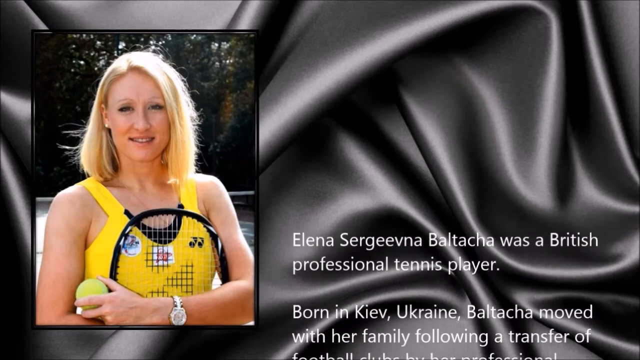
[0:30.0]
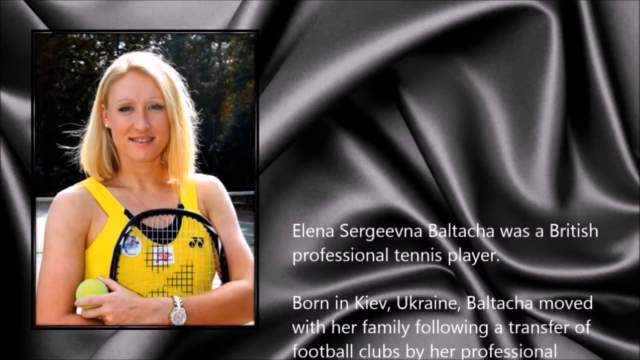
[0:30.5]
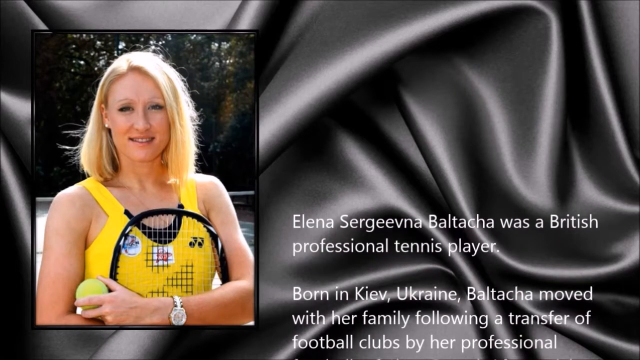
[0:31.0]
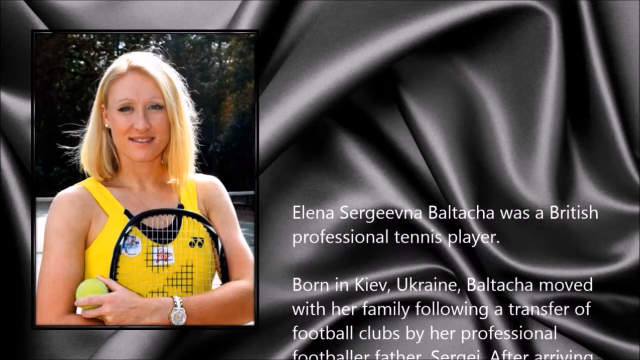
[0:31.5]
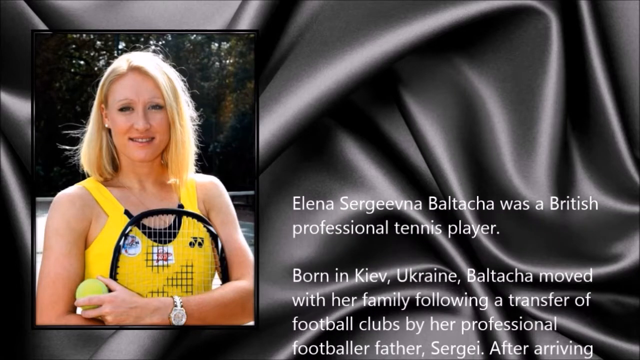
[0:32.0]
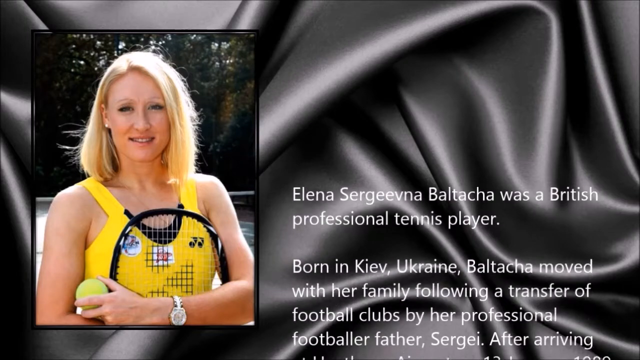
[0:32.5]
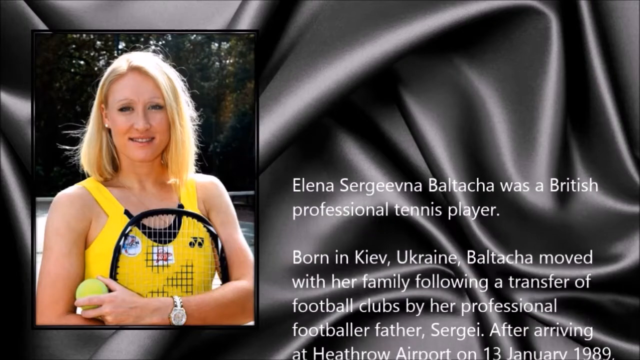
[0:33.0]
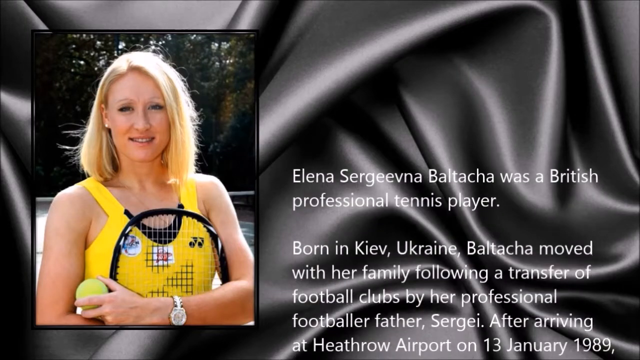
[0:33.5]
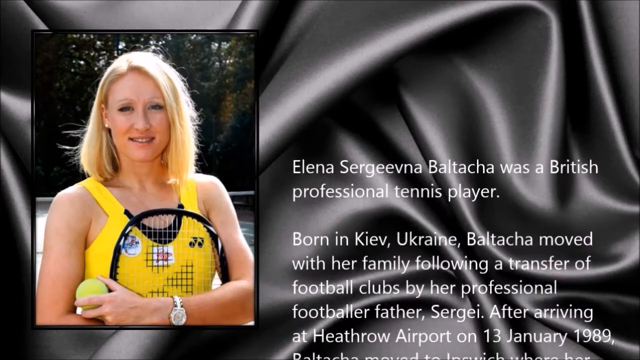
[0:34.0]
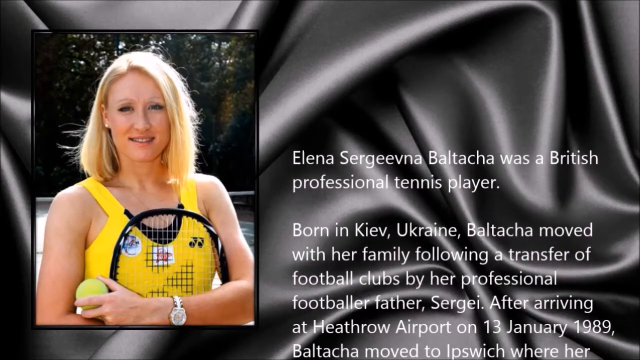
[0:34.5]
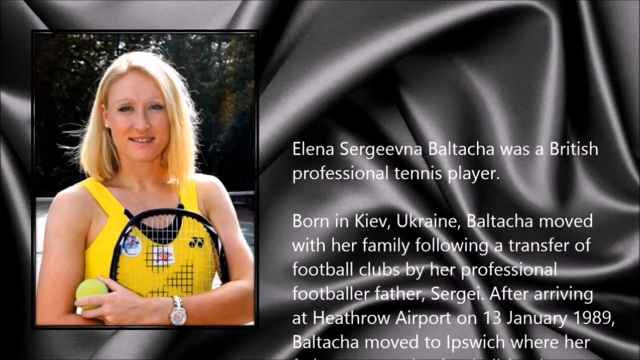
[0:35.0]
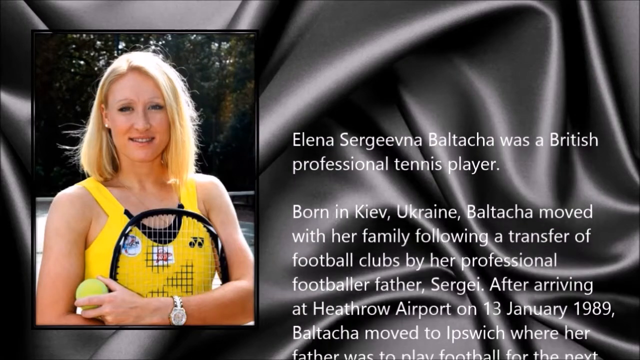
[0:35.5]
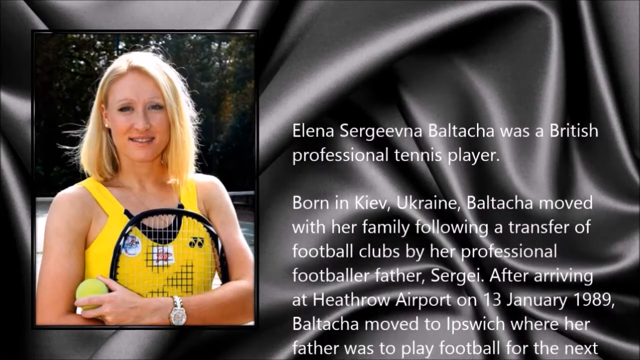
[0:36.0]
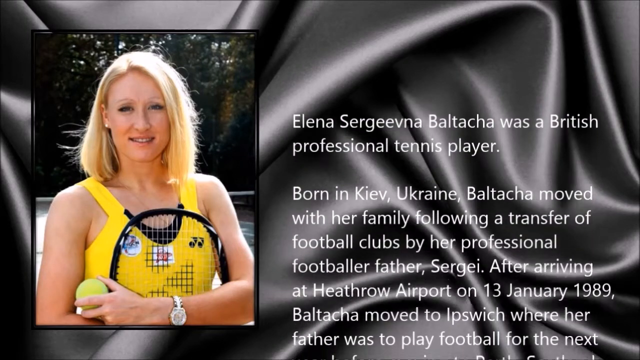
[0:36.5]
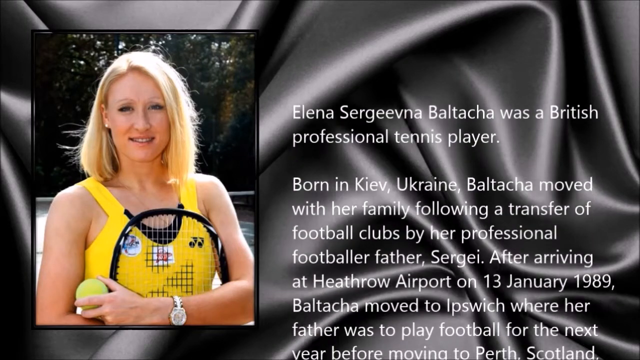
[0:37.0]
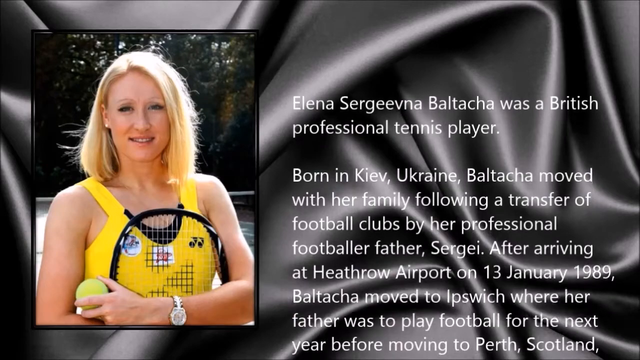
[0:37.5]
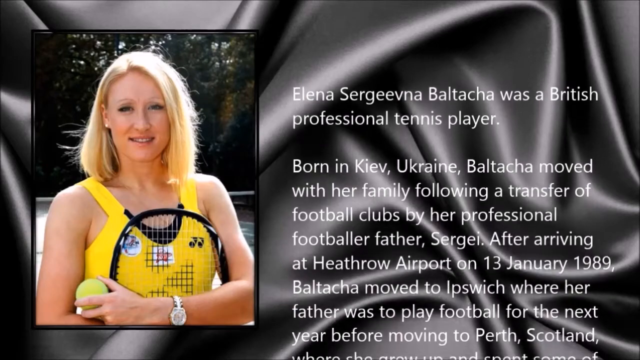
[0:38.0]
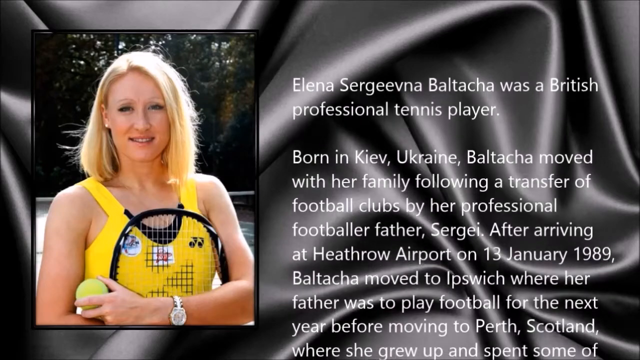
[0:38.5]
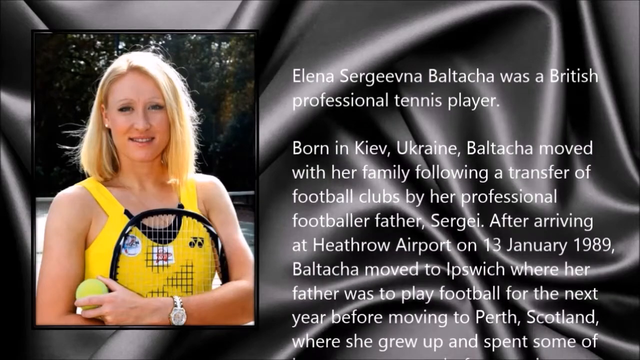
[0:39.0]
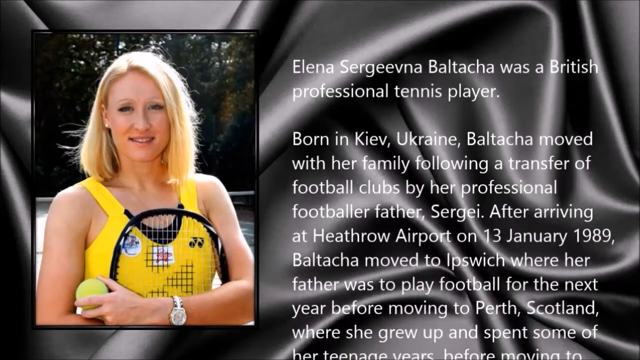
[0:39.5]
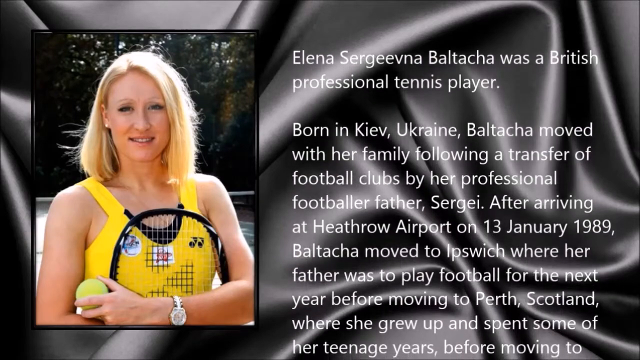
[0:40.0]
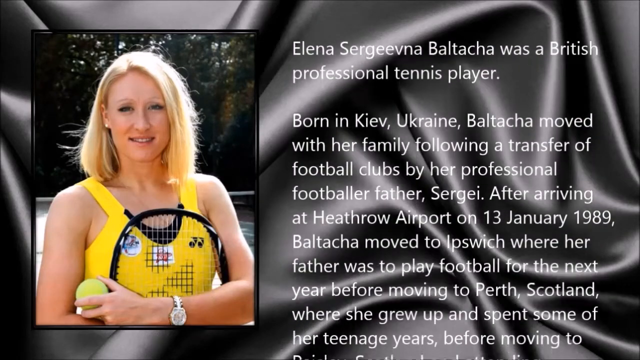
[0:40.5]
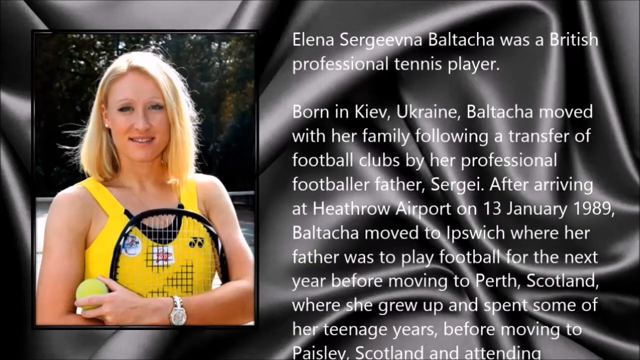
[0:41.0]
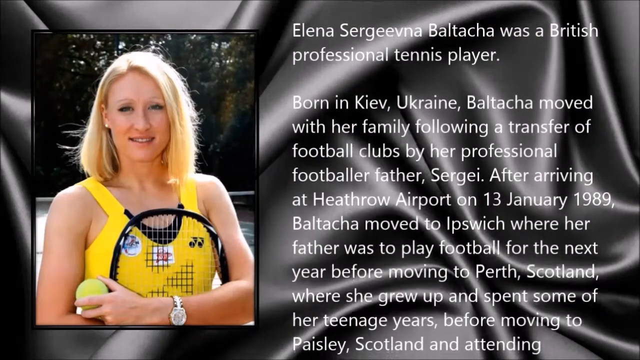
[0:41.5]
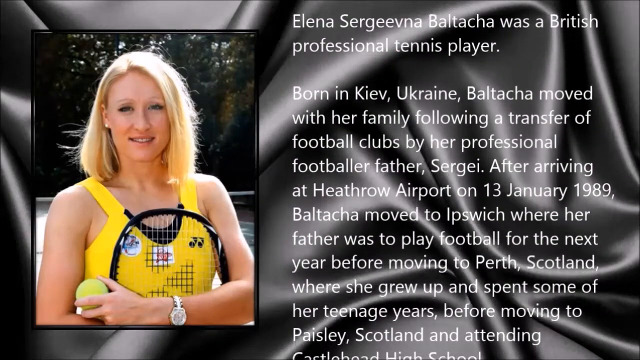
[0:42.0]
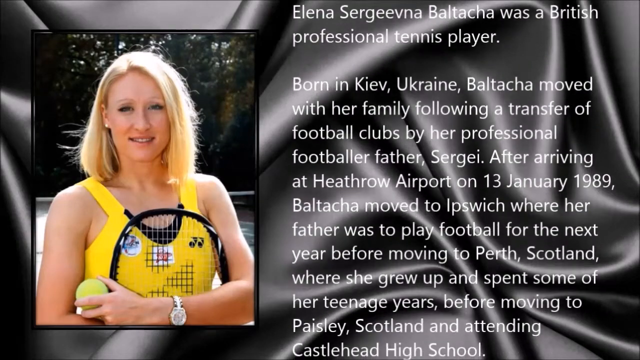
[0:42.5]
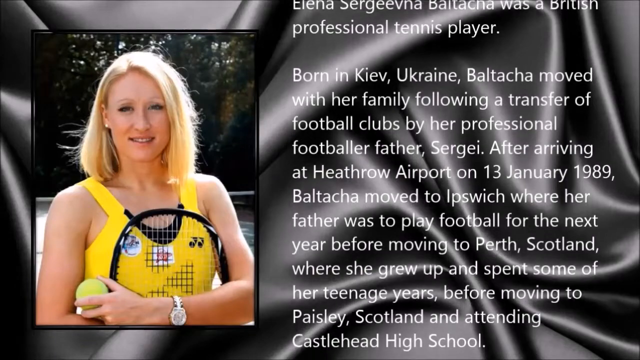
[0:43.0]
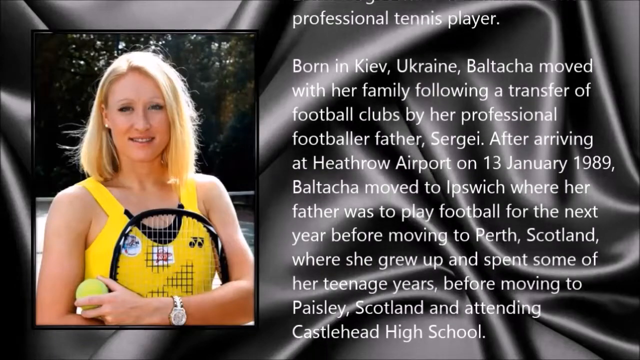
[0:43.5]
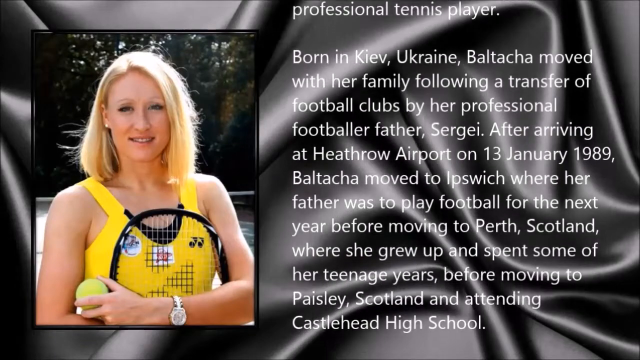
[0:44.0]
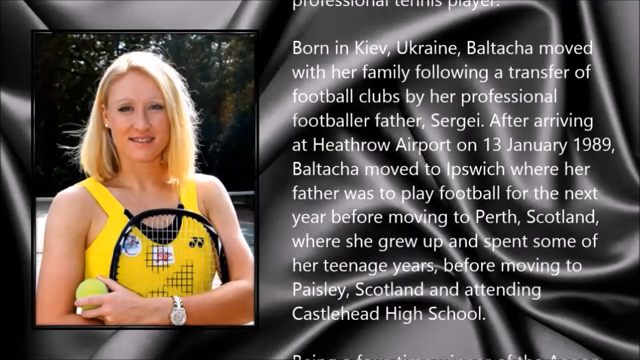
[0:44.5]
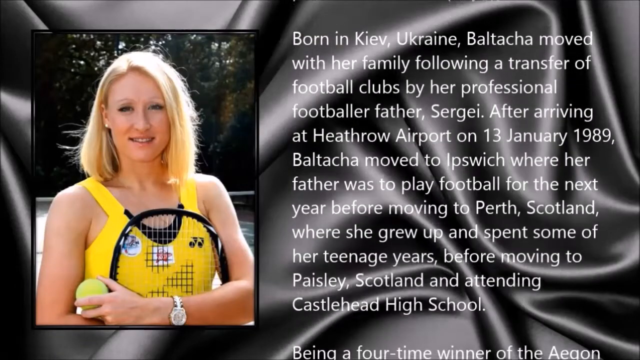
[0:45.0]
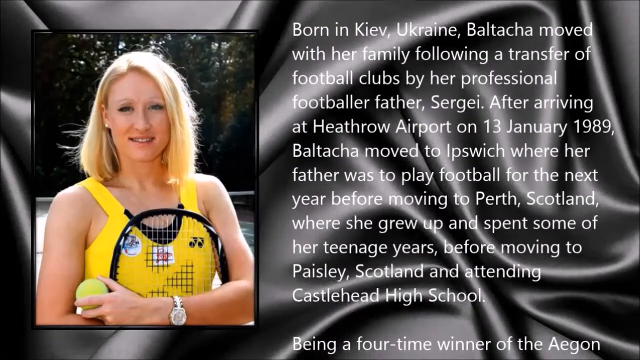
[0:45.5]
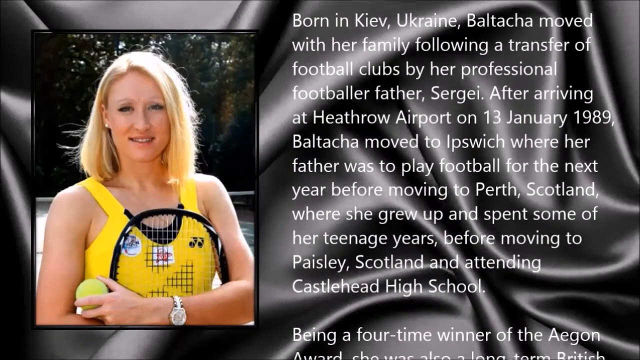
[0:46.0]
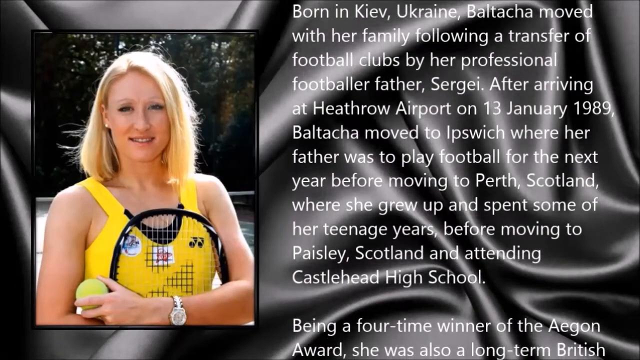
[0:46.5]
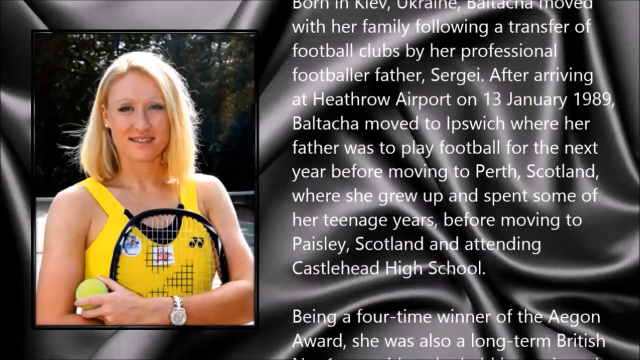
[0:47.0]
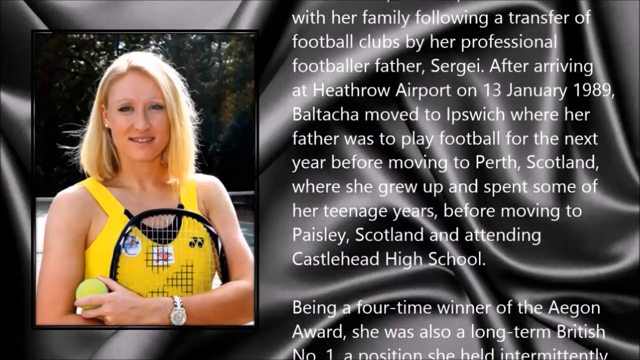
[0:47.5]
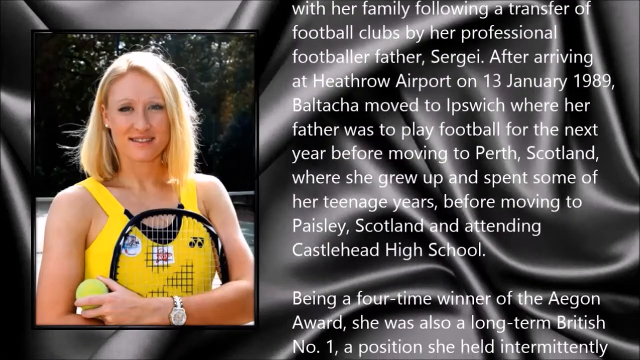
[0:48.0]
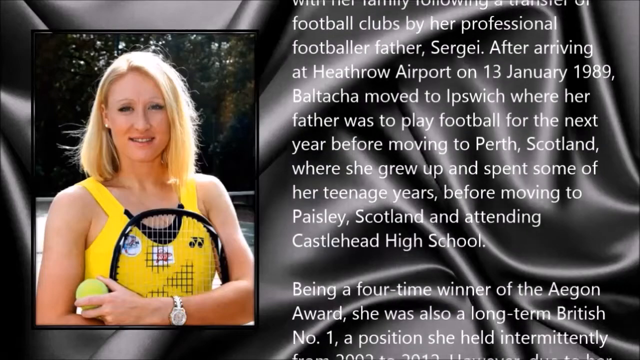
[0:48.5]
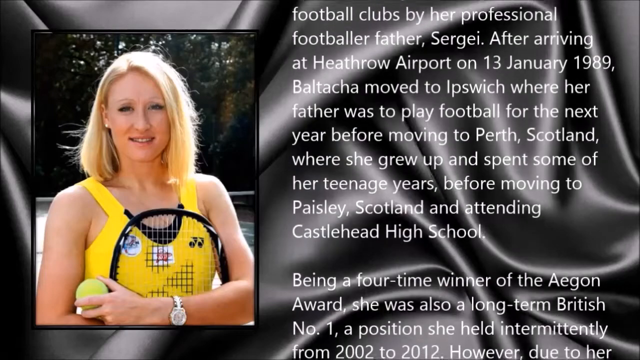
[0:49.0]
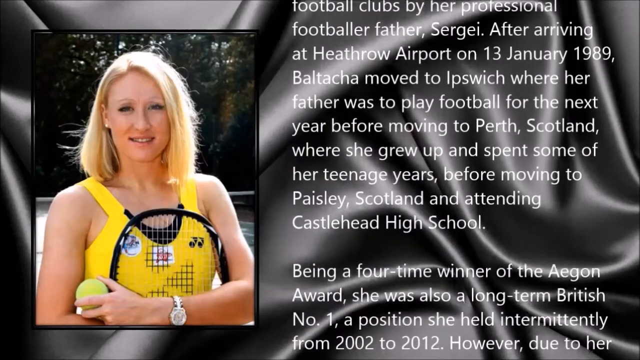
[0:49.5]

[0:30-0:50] The whole screen looks like a piece of black silk with wrinkles in it. On the left side of the screen is a square picture of a woman with long blonde hair wearing a yellow tank top, holding a tennis racket up to her chest and a tennis ball in her left hand. In the background are trees, grass and weeds growing, so she is in the forest. To the right of her, writing comes up from the bottom of the screen: "Alina Sergeyevna Baltacha was a British professional tennis player. Born in Kiev, Ukraine, Baltacha moved with her family following a transfer of football clubs by her professional footballer father, Sergei, after arriving in Heathrow Airport on 13 January 1989. Baltacha moved to Ipswich, where her father was to play football for the next year before moving to Perth, Scotland, where she grew up and spent some of her teenage years before moving to Paisley, Scotland and attending Castlehead High School."